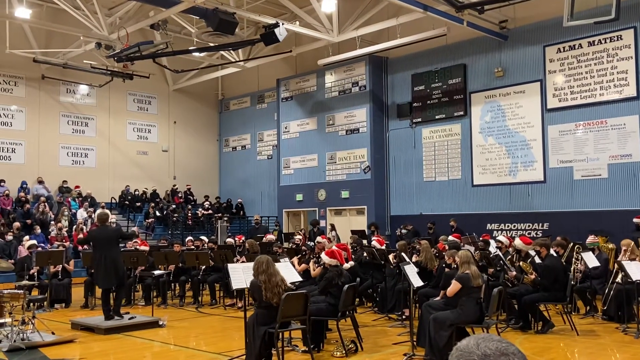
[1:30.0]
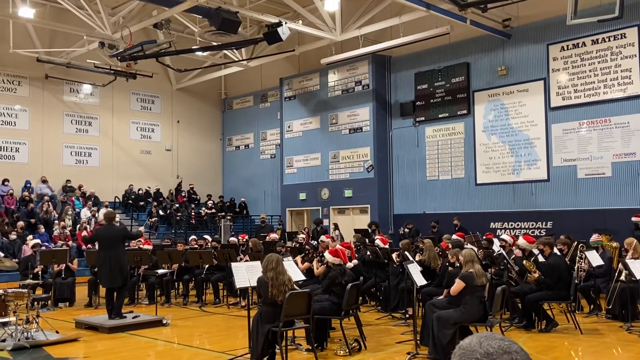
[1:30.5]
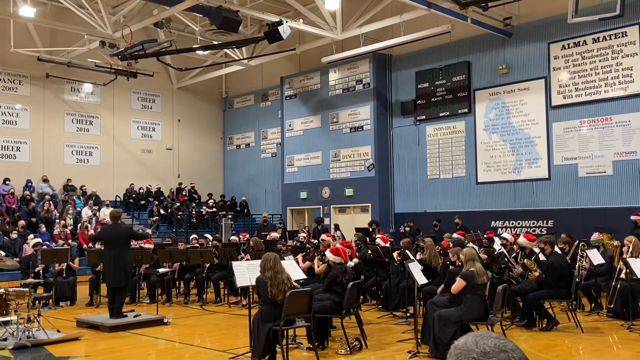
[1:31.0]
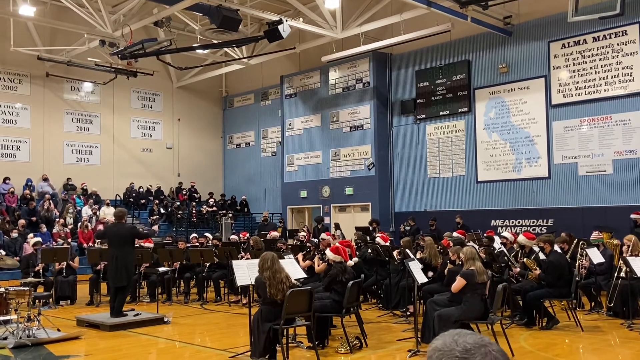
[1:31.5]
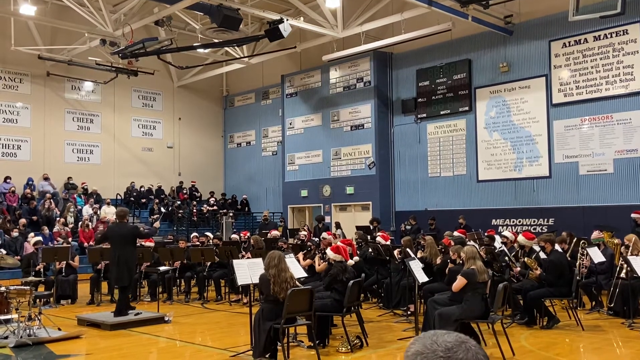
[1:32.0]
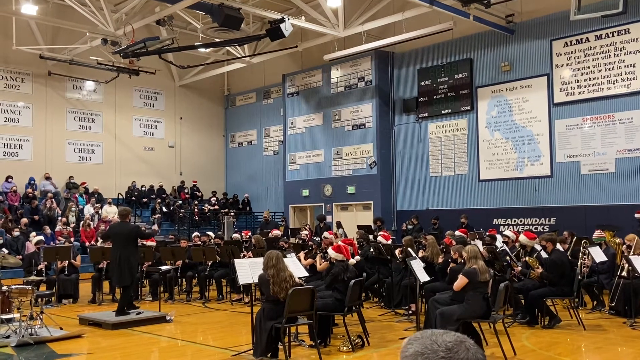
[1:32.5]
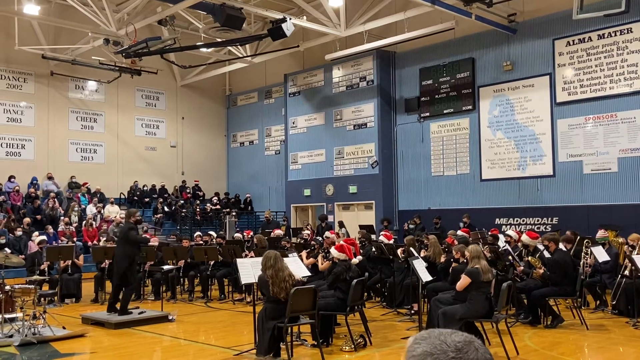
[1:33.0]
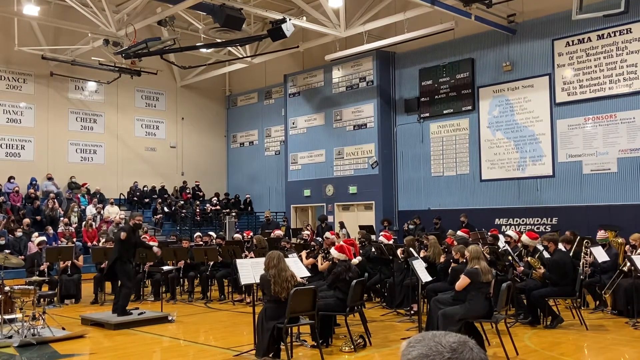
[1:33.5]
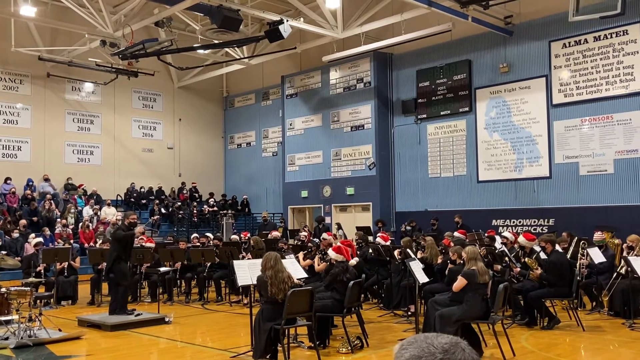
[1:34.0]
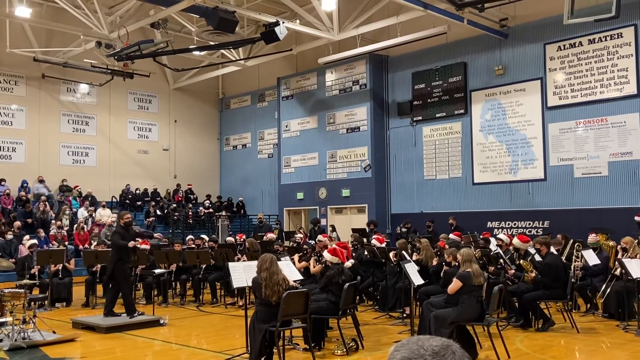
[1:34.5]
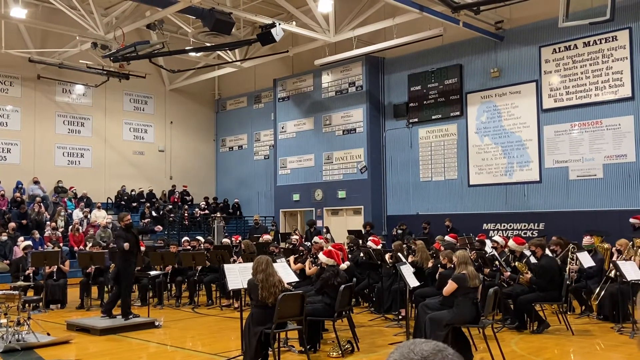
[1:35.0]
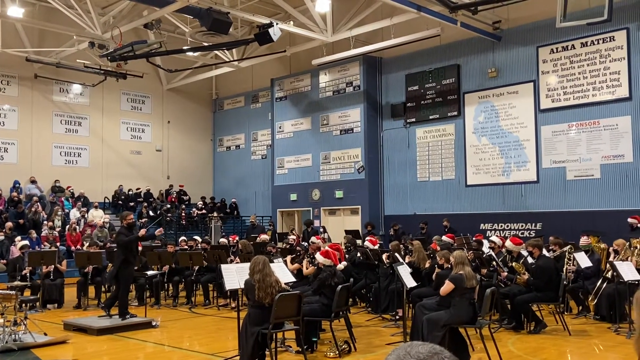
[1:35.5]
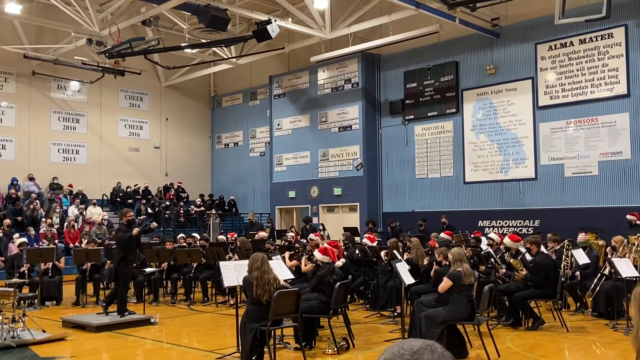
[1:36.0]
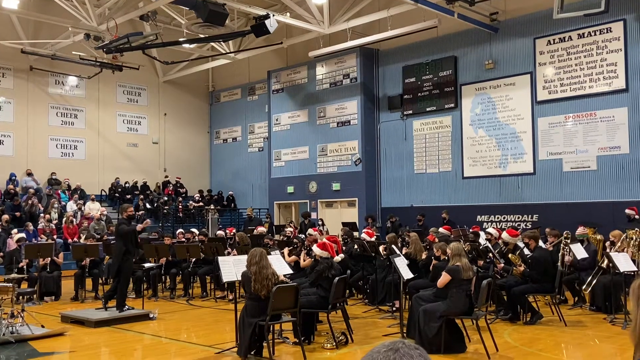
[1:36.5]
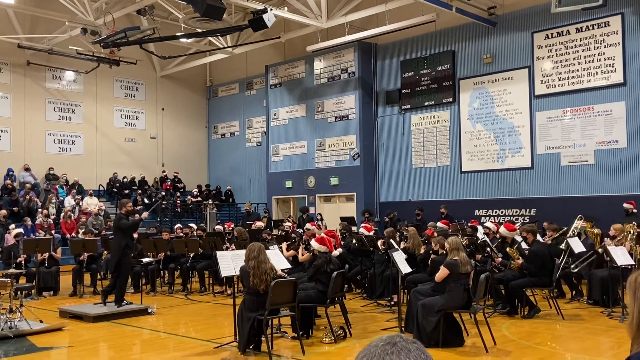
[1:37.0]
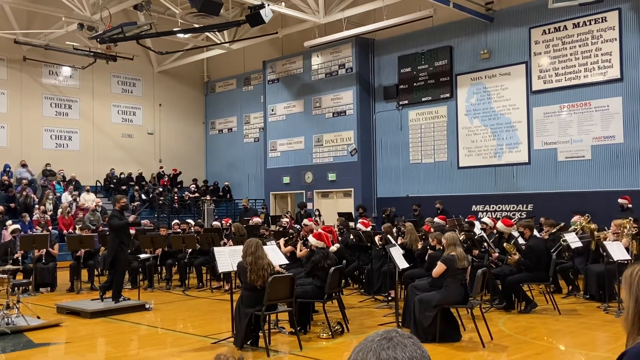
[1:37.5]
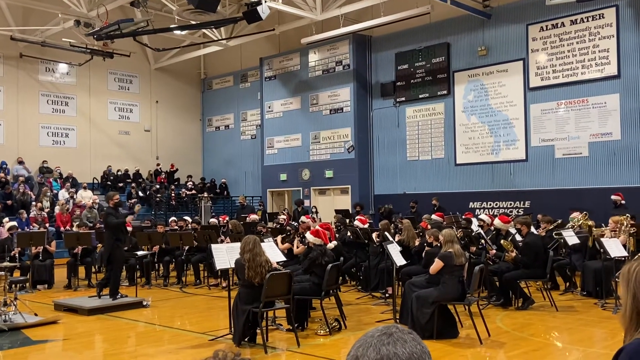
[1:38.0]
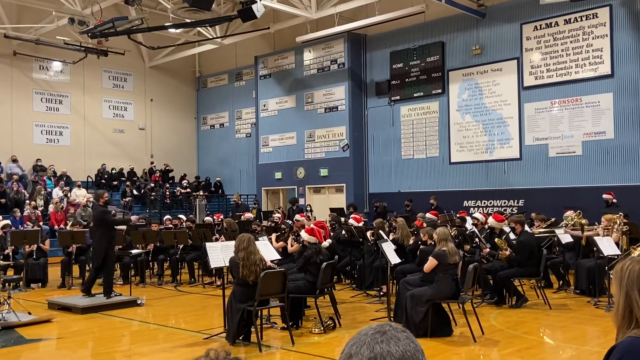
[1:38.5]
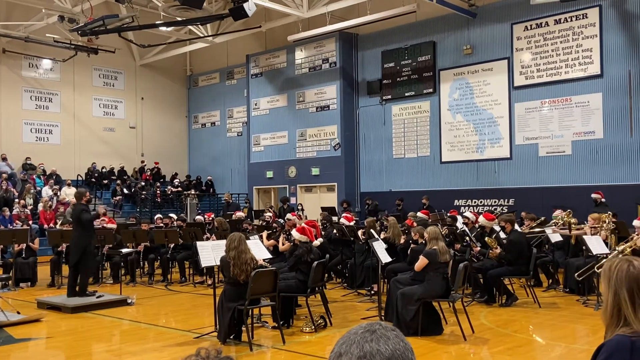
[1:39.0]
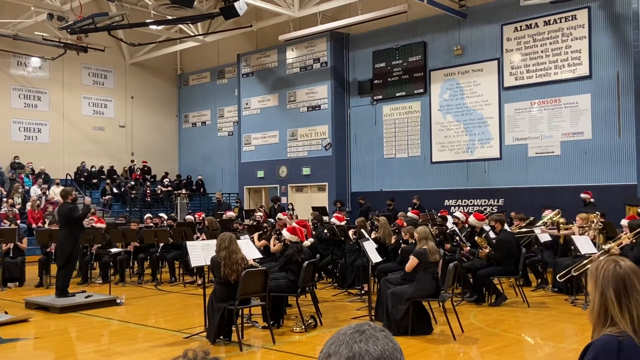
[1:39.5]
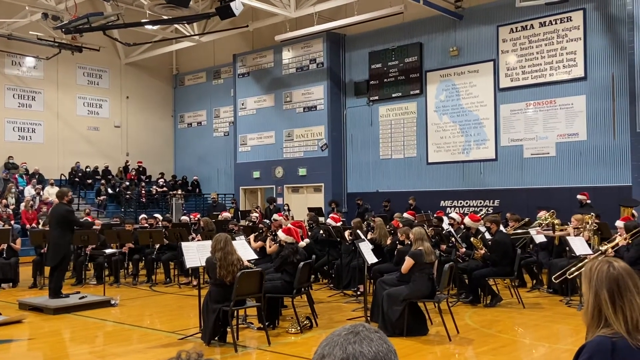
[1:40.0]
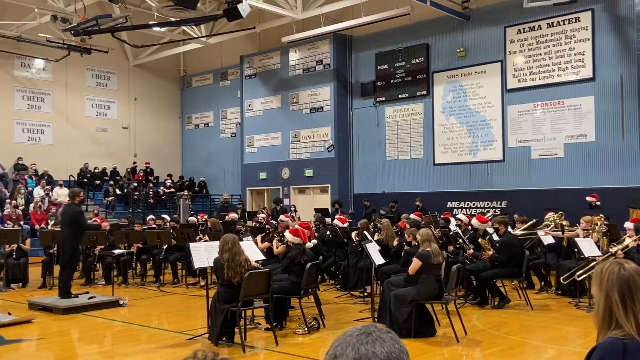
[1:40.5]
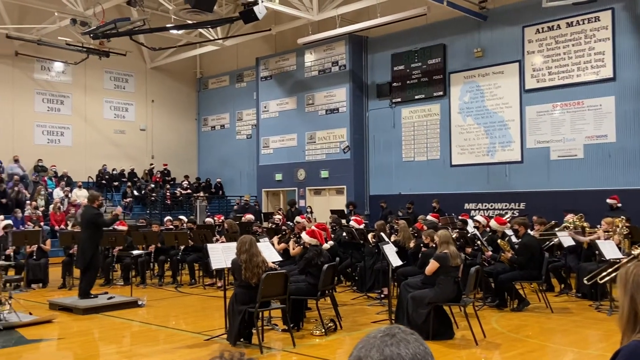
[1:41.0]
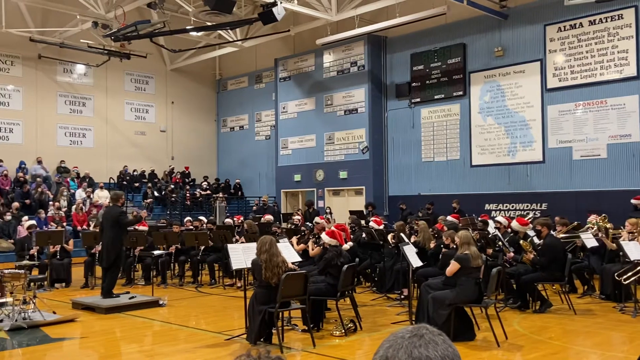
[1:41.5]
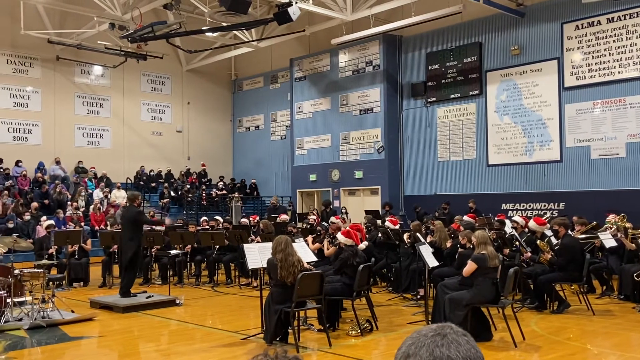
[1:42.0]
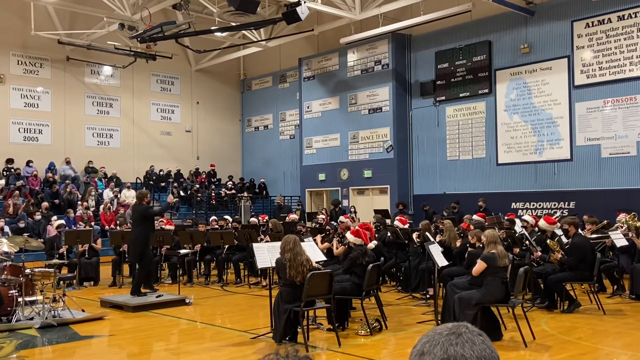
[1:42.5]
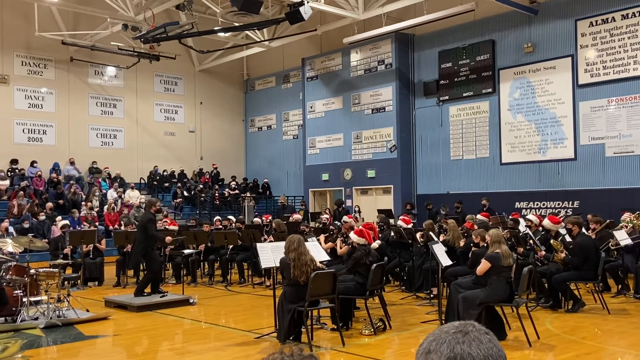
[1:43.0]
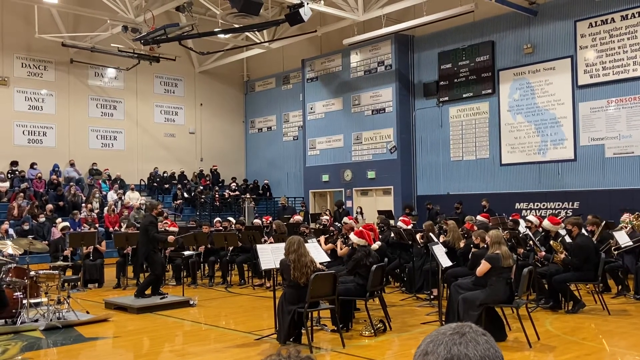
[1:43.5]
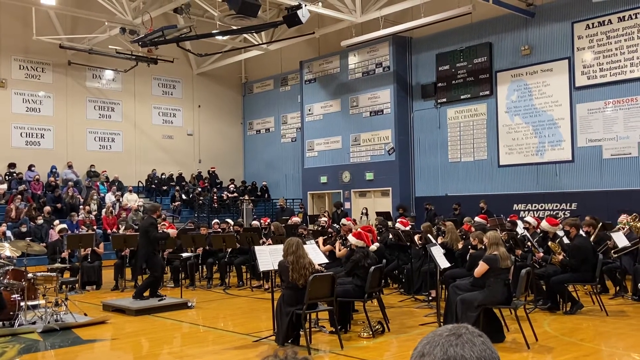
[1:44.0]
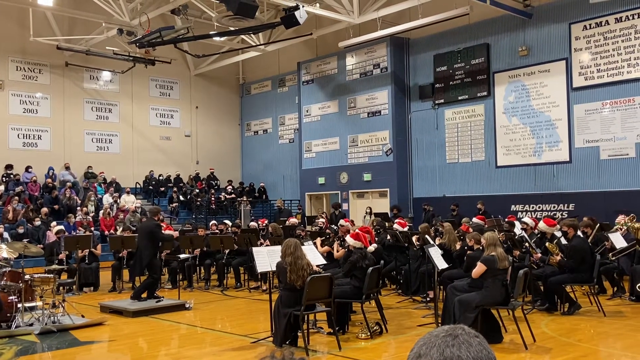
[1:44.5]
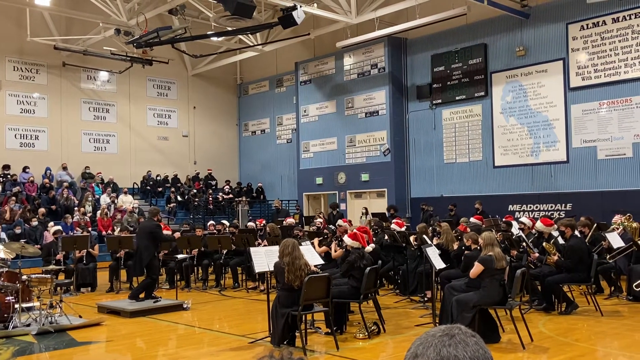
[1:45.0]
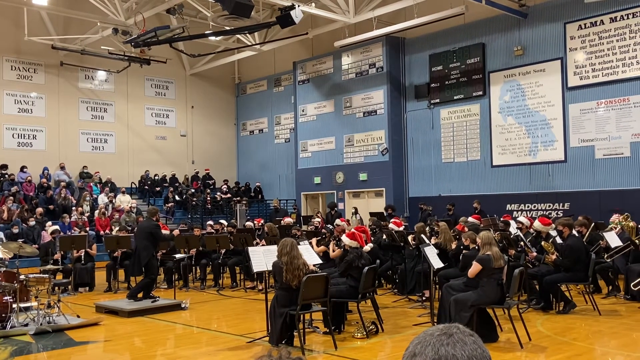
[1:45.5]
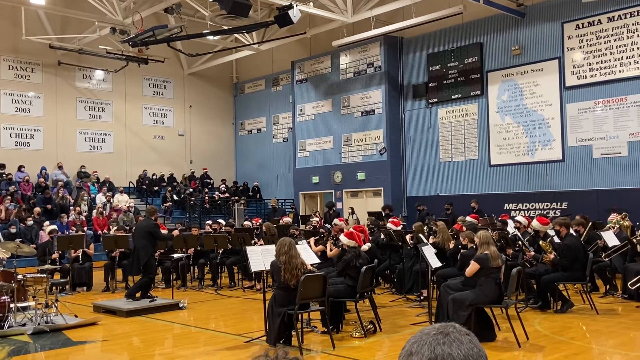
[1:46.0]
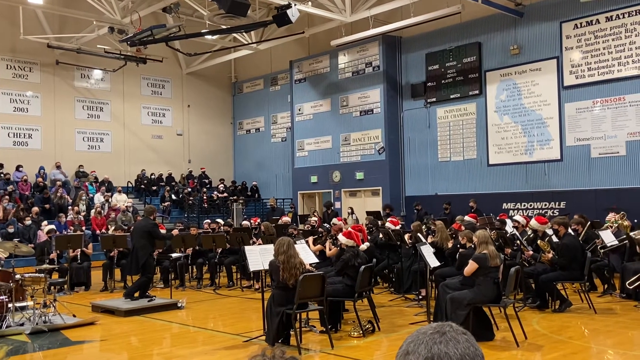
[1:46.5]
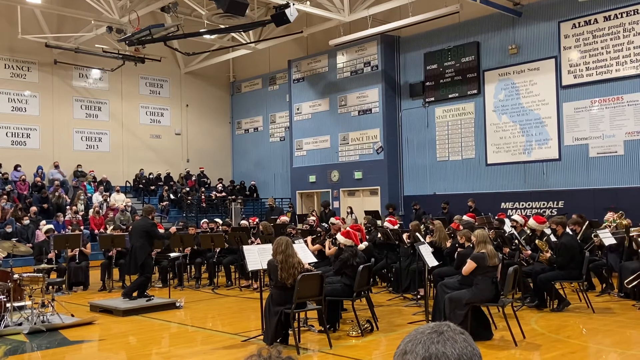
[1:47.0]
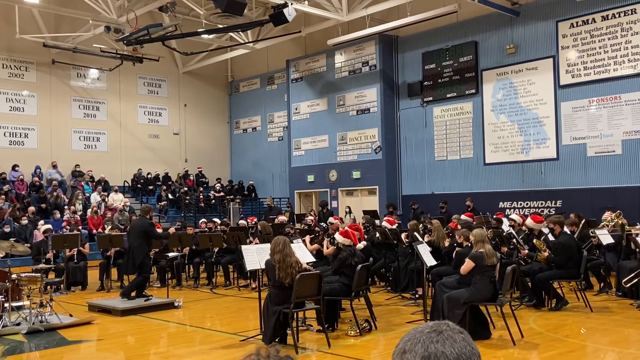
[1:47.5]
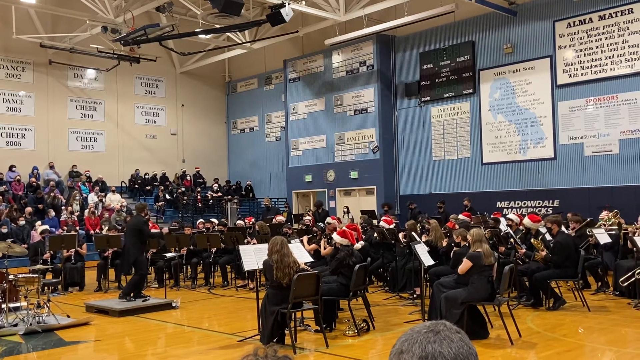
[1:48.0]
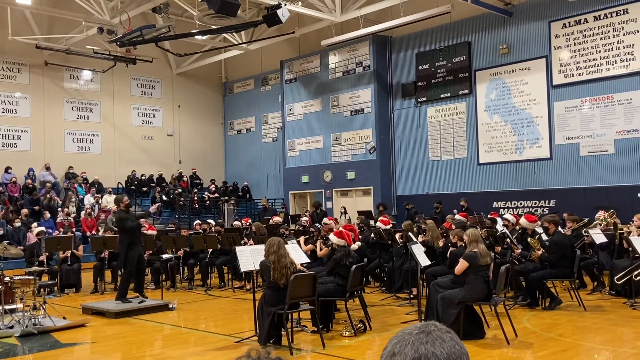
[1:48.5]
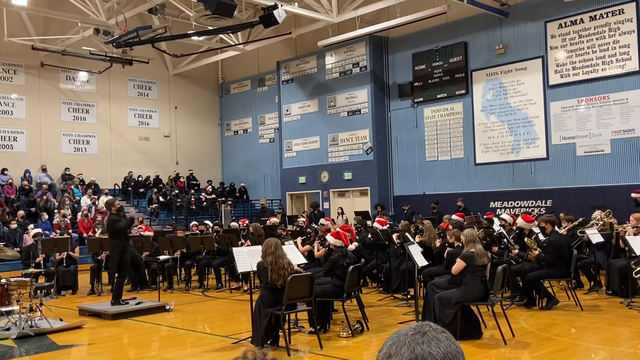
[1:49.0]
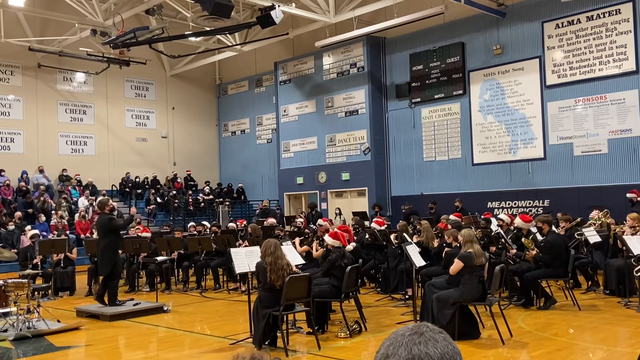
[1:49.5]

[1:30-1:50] The students are playing in what looks like a Christmas concert, guessed from the red and white Santa hats they wear. They sit in black chairs on the shiny gym floor, which has lines painted on it to make a basketball court. For some of the students, only the back of their musical instruments is visible, so it is hard to tell what instrument it is. The conductor wears a black suit and apparently a black mask, and he holds the stick in his hand while conducting the band. At one point he gets a little slower, then gets quicker and puts his arms up. The people with the trombones all pick up their trombones and start playing at the same time.